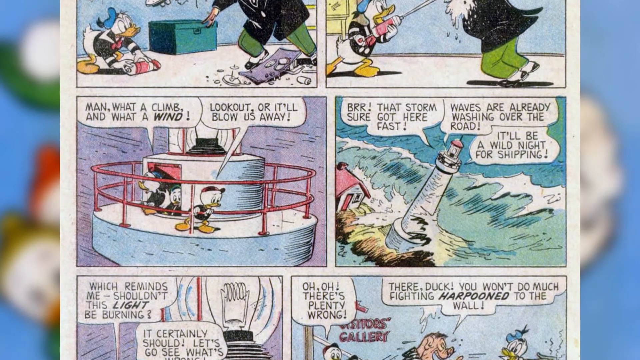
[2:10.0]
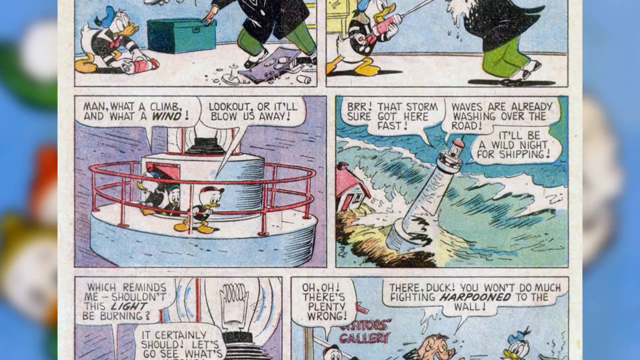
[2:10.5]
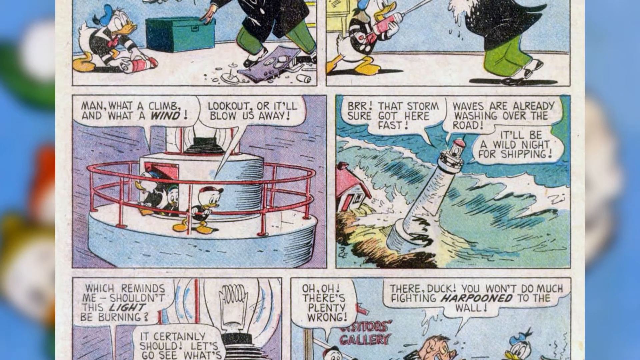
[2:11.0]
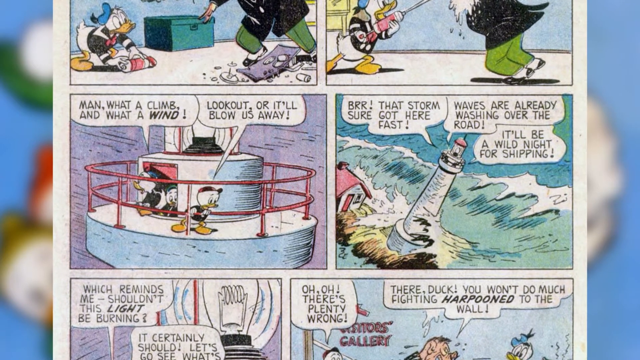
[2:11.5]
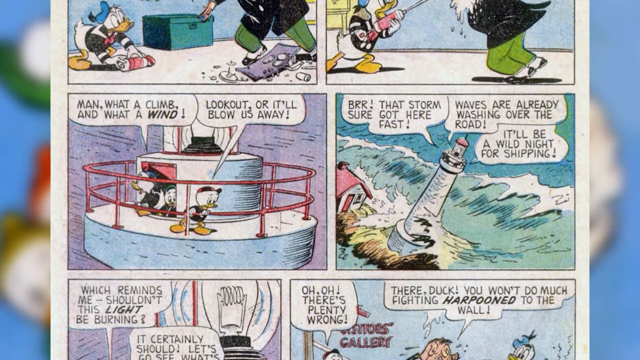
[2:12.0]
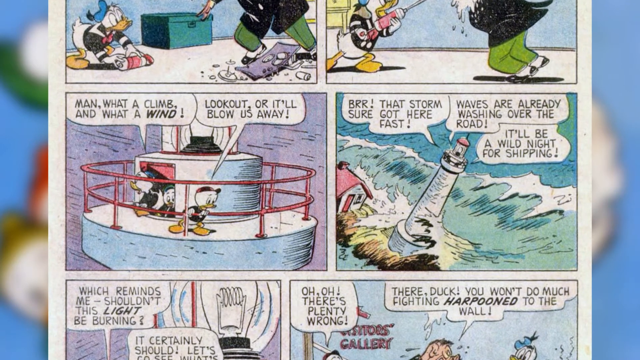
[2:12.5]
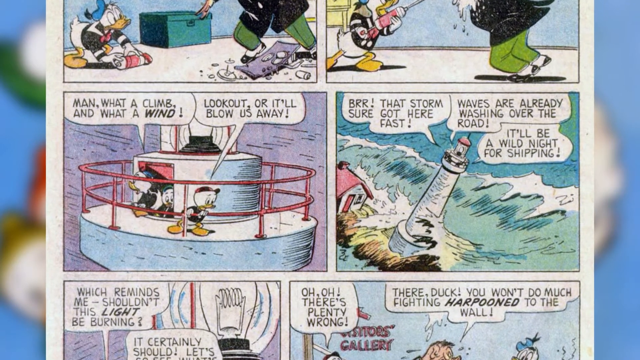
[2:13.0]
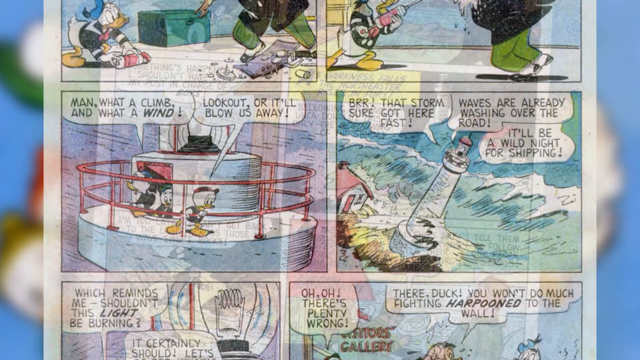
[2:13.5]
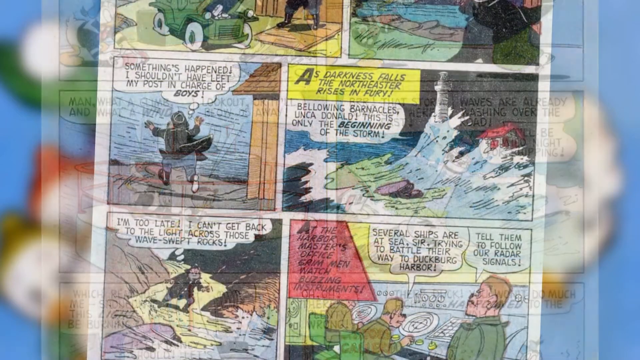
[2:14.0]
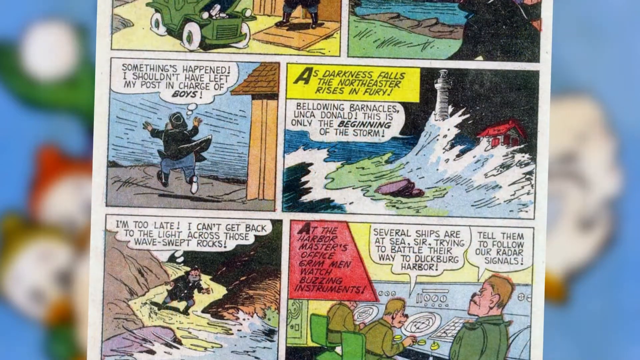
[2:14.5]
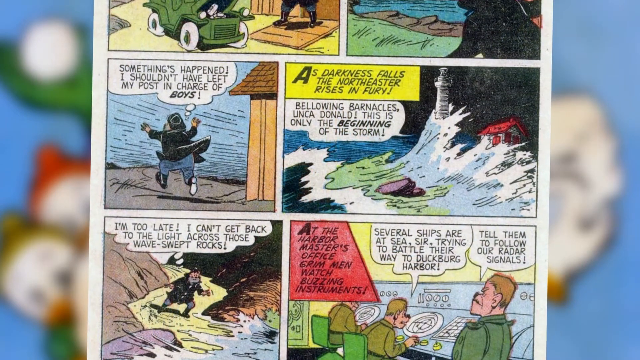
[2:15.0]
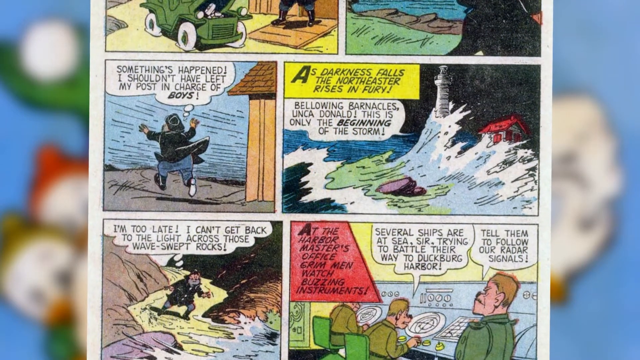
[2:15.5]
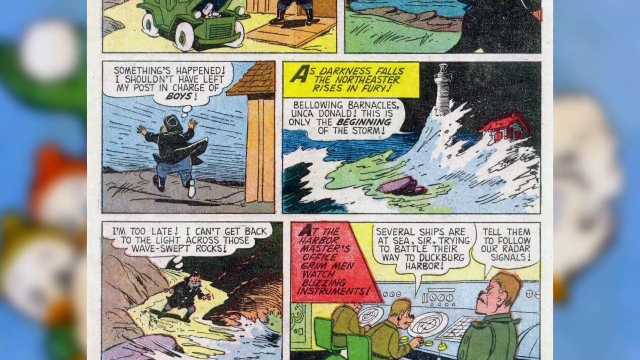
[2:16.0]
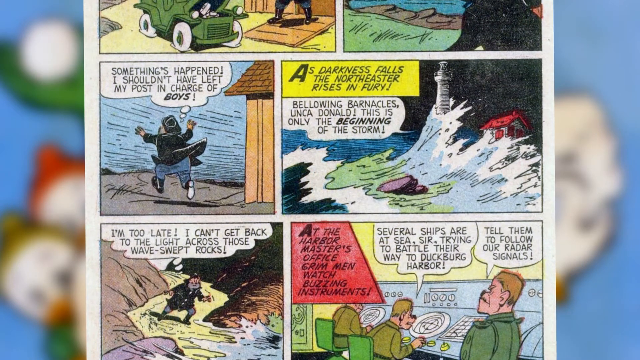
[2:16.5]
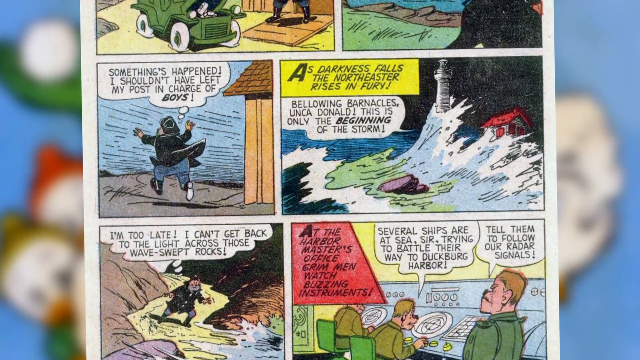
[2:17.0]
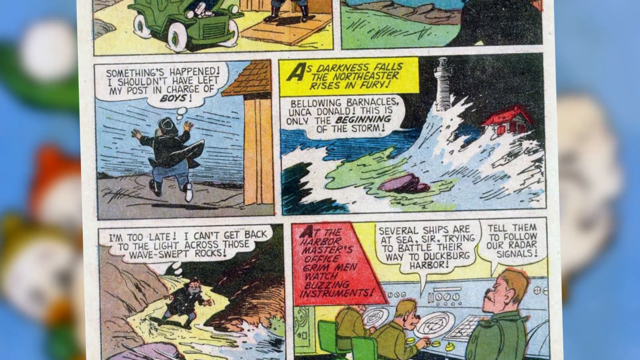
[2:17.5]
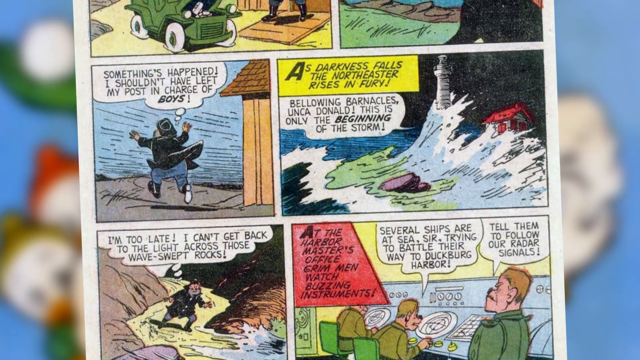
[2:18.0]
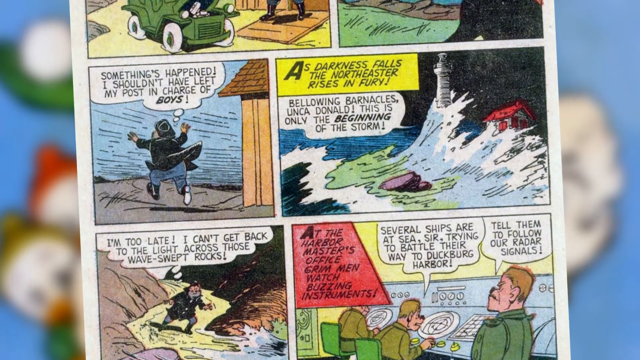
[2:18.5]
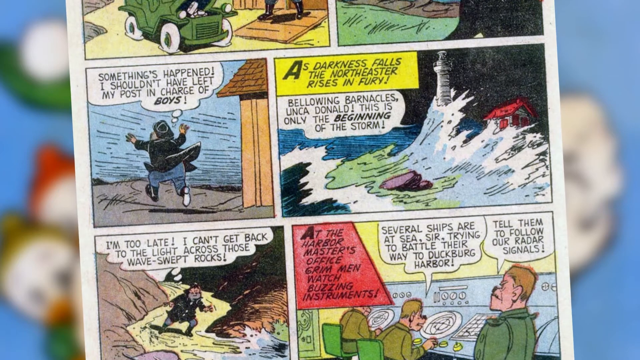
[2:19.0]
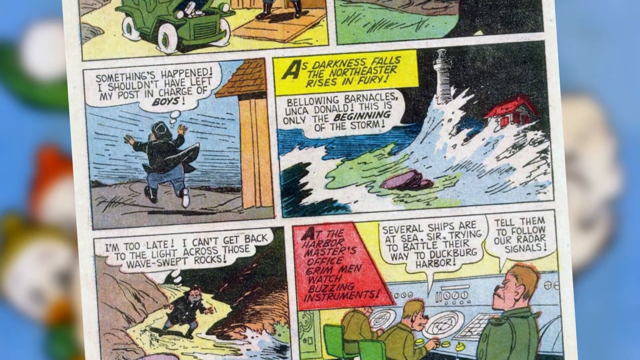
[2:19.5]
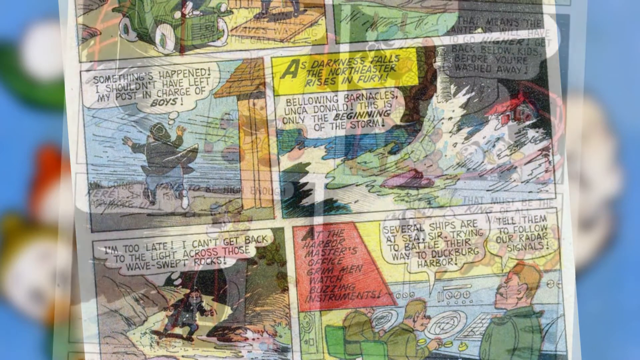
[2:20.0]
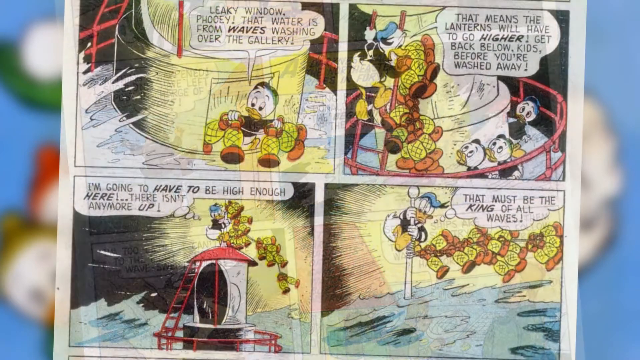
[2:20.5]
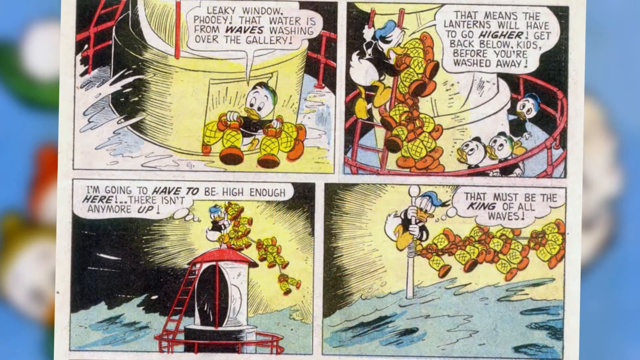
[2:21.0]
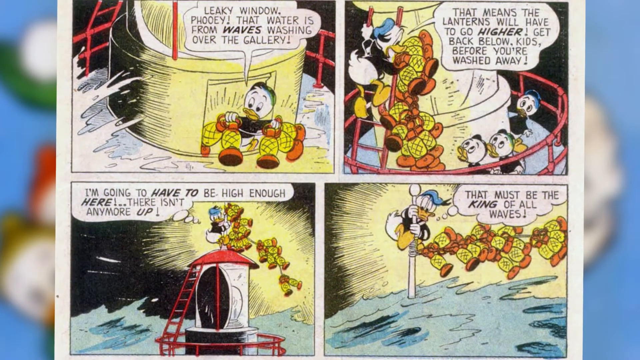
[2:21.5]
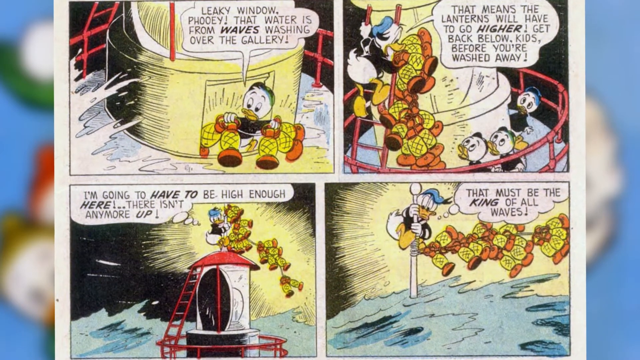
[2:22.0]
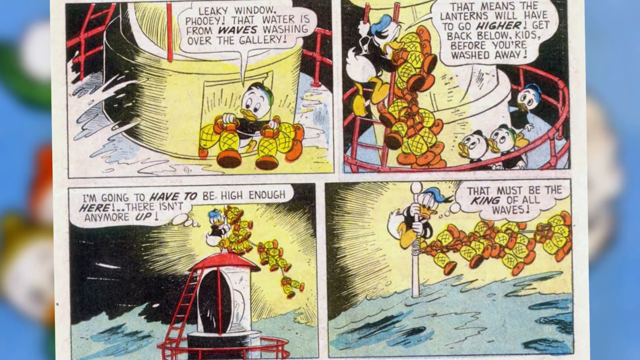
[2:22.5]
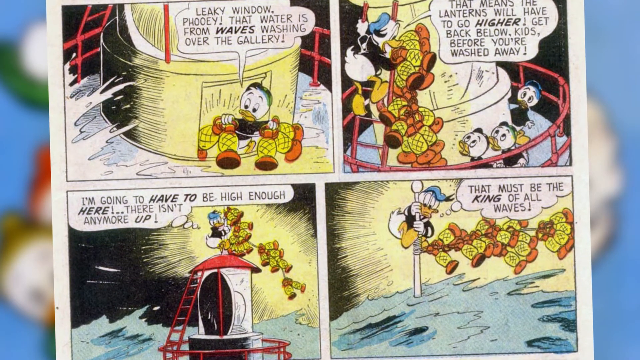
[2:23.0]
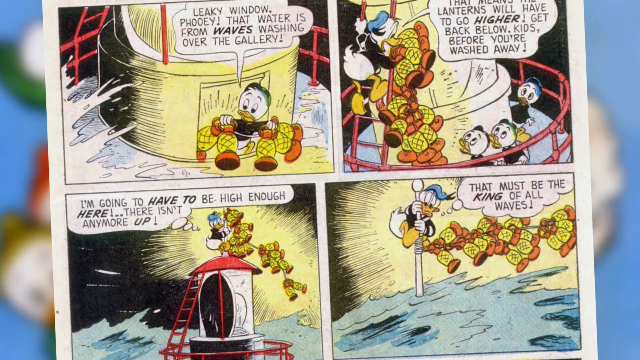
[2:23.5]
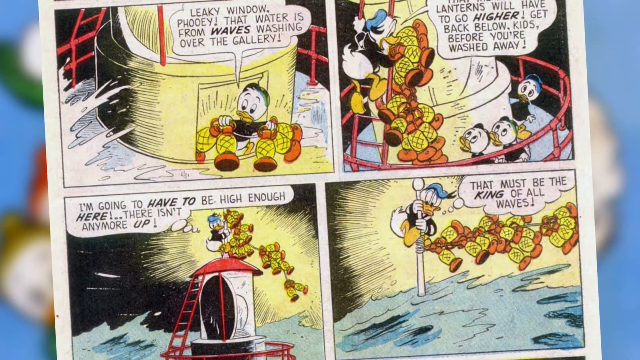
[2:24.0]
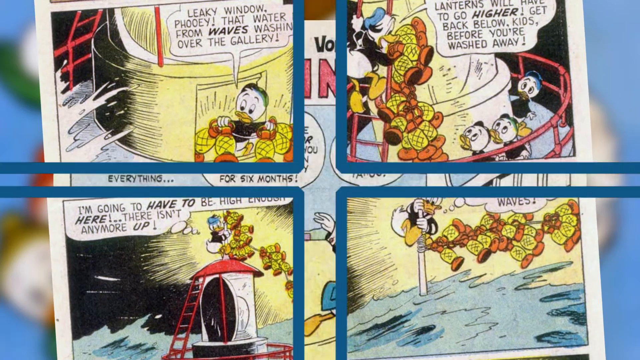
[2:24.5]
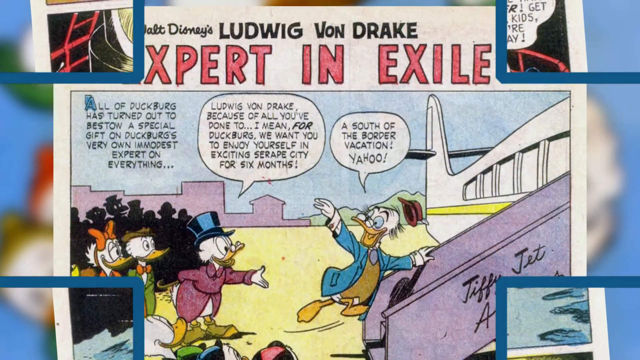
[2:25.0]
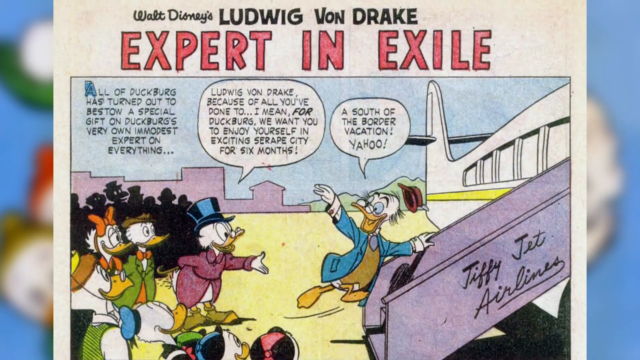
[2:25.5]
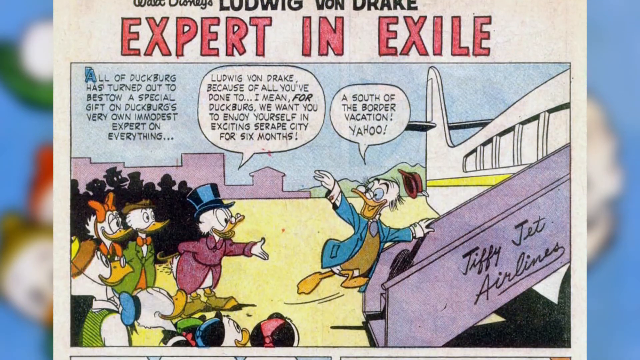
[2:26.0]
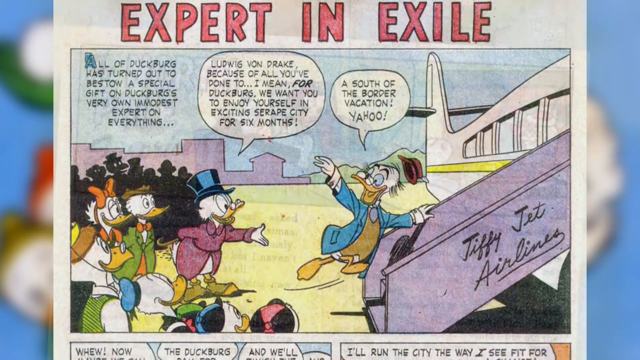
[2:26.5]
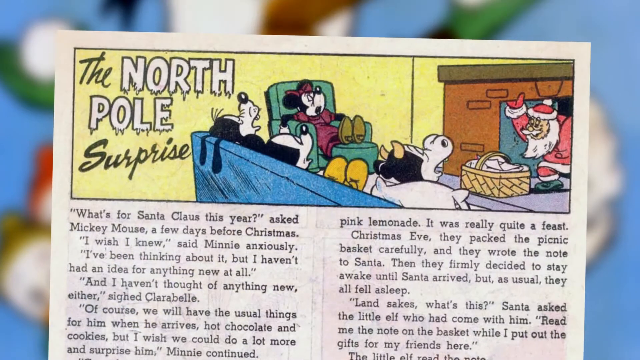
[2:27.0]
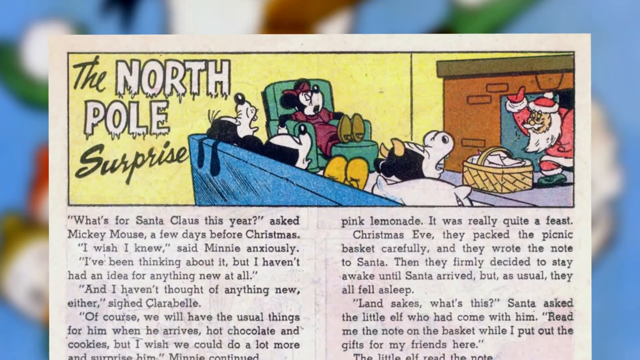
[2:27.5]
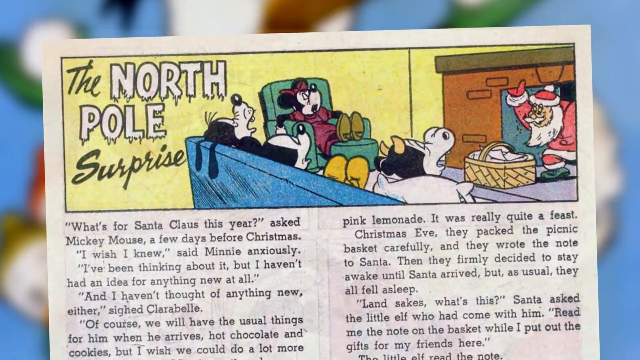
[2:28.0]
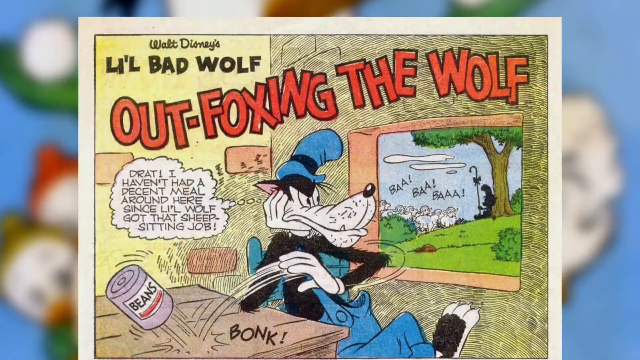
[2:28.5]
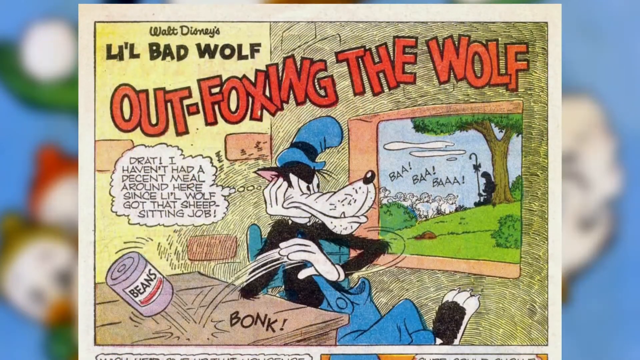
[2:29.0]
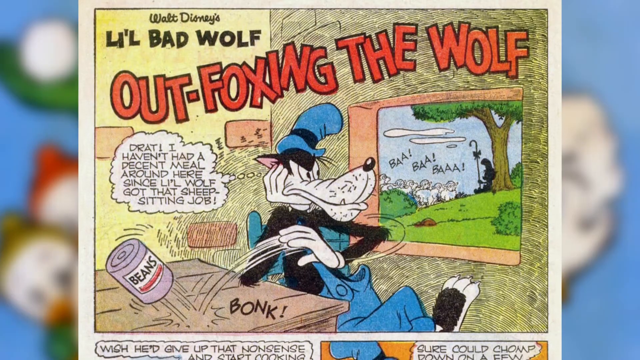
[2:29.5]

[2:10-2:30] A comic strip shows Daffy Duck fighting off the greedy businessman pig, while the three little ducks are on top of the lighthouse and very large storms wash ashore. The lighthouse keeper, who was at his cottage trying to save his belongings before the storm hit, tries to run back to the lighthouse but cannot, because the storm blocks the path with wave-swept rocks. A naval command center discusses the storm and several ships that are kind of lost at sea and trying to navigate back to safety. The strip then shows the plan Daffy Duck made with the three little ducks to illuminate the old lighthouse, which has no electricity: they seem to have strung together a bunch of lanterns, climb to the very top of the lighthouse, and hold up the lanterns to light the sky and guide the ships. The ducks then seem to be rewarded with a gift, with Ludwig von Drake thanking them as he gets onto a private plane for a vacation. A few more comic strips follow, showing other comics such as the North Pole Surprise, featuring Minnie Mouse, Mickey Mouse, Santa Claus and a few other characters, and a comic about the Lil Bad Wolf called Out Foxing The Wolf.